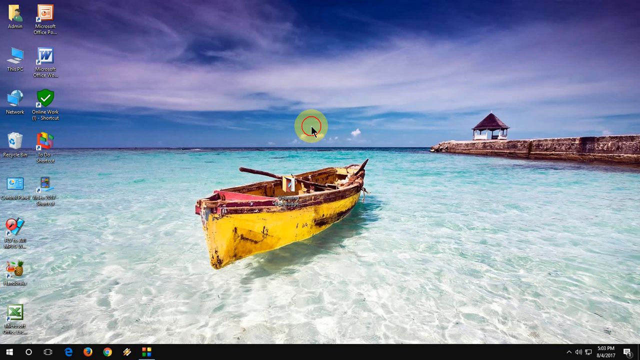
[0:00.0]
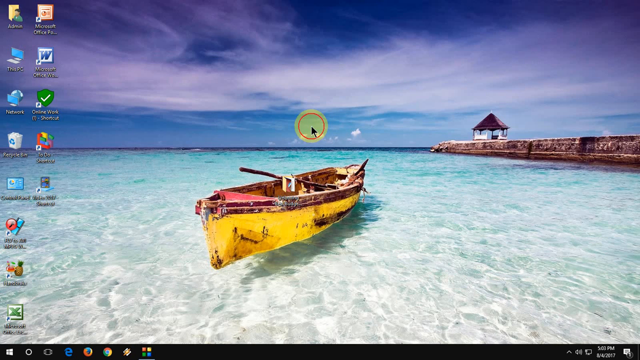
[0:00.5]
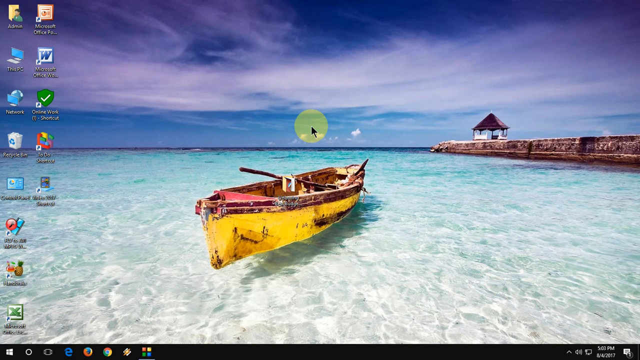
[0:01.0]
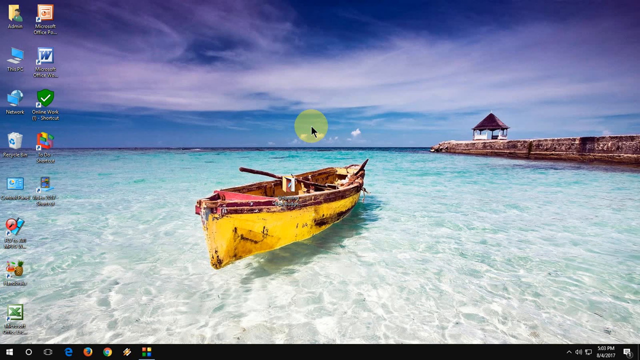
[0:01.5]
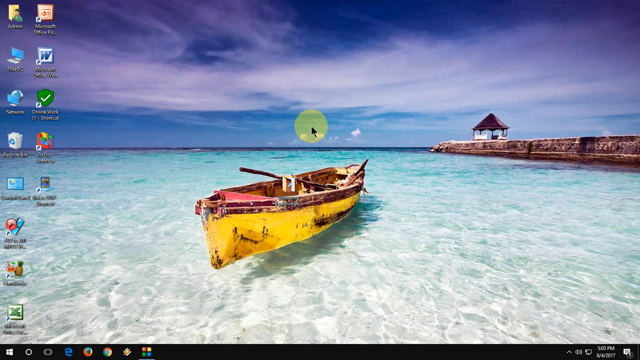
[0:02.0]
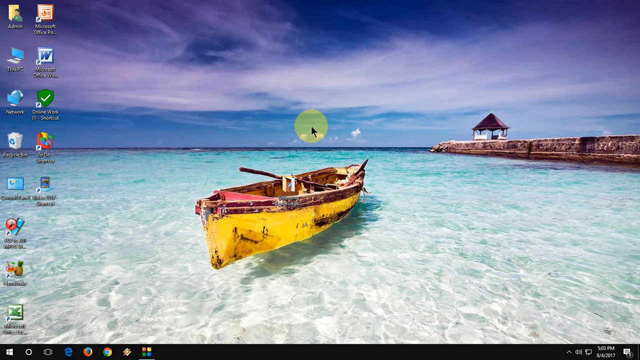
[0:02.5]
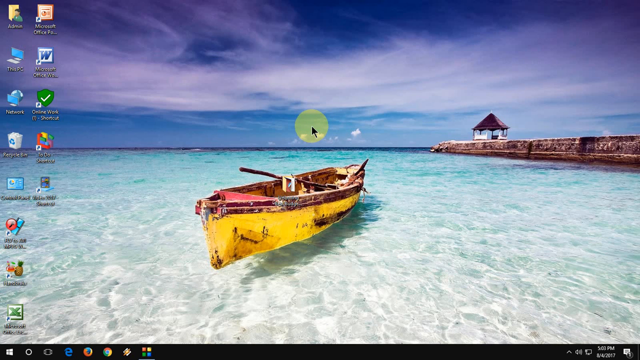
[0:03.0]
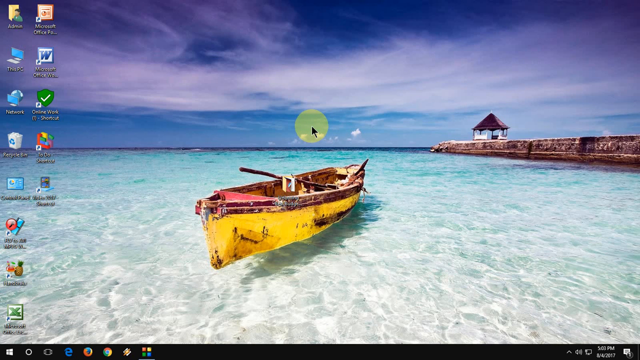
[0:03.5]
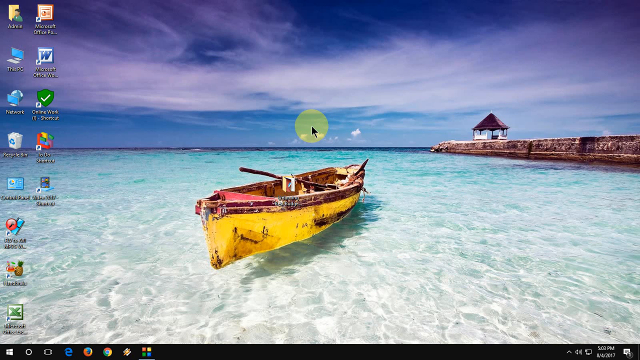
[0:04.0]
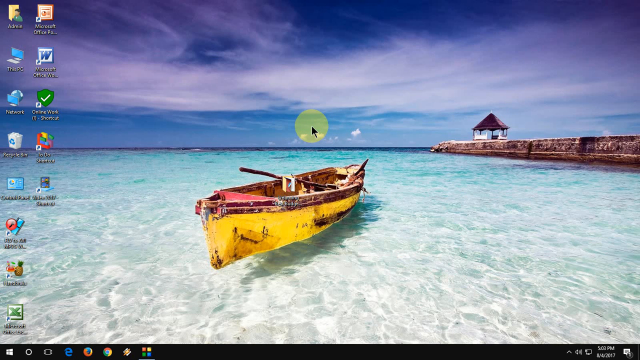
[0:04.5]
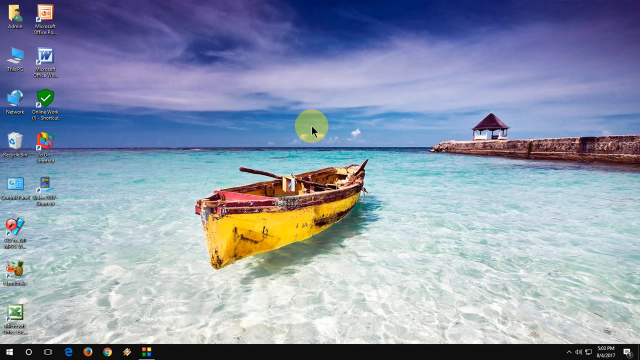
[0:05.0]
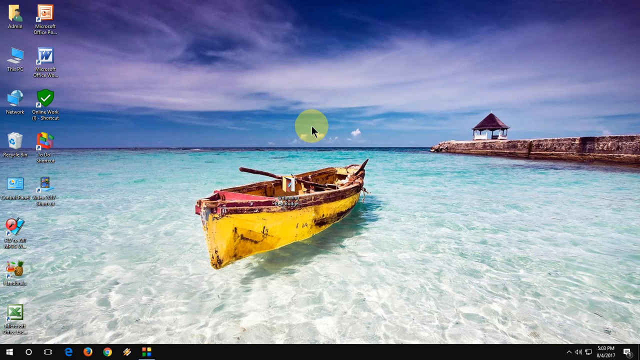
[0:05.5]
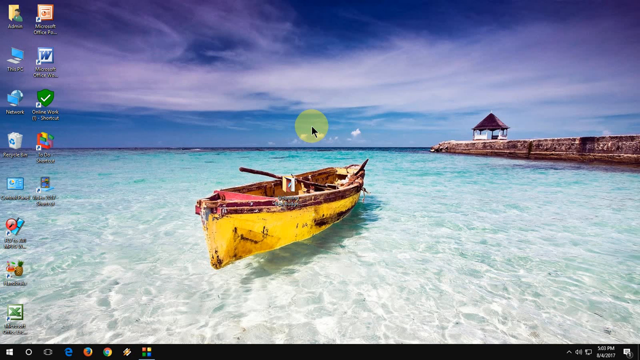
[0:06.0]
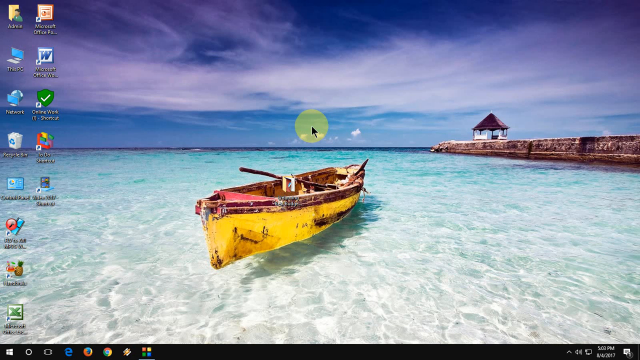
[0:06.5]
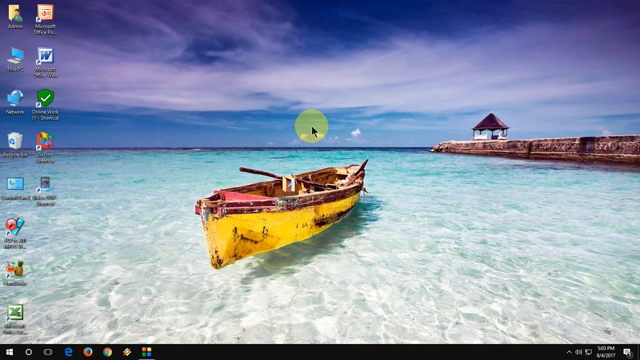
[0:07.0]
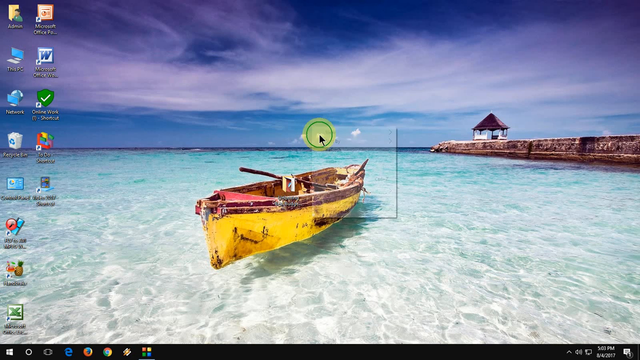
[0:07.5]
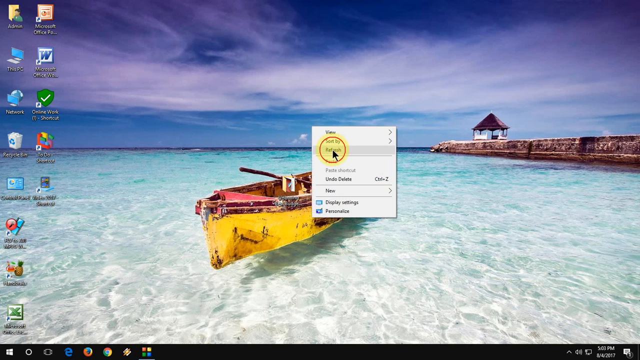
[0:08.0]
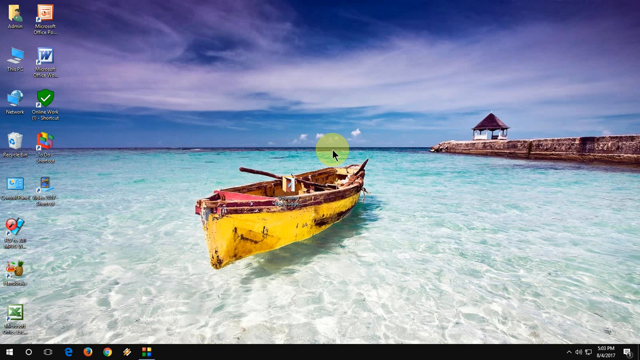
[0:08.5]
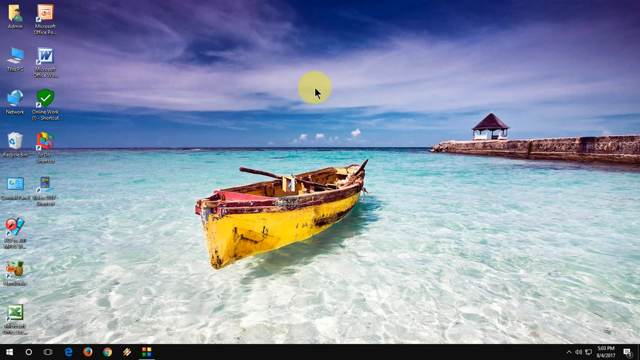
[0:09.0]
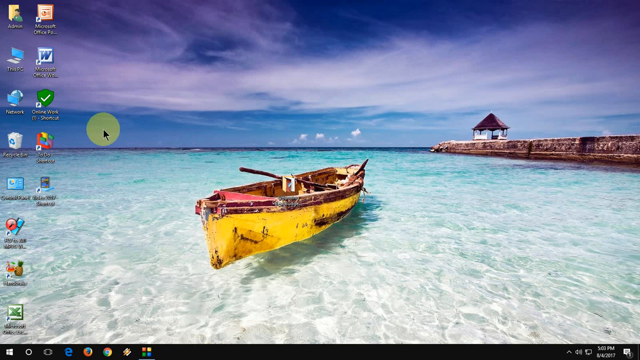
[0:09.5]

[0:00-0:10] A computer desktop is displayed with a wallpaper showing what appears to be a yellow pot and some water. There are 13 icons on the desktop. The wallpaper shows a very blue sky with feathery clouds, and a walk path with a gazebo at the end.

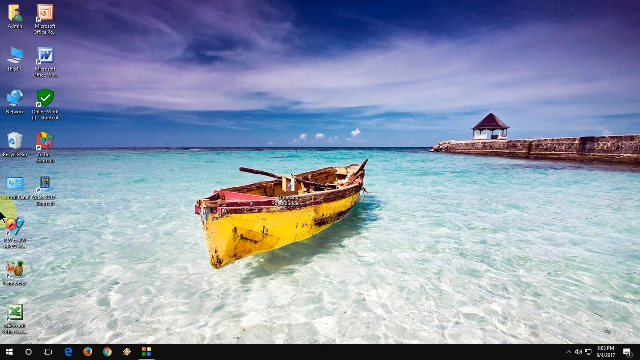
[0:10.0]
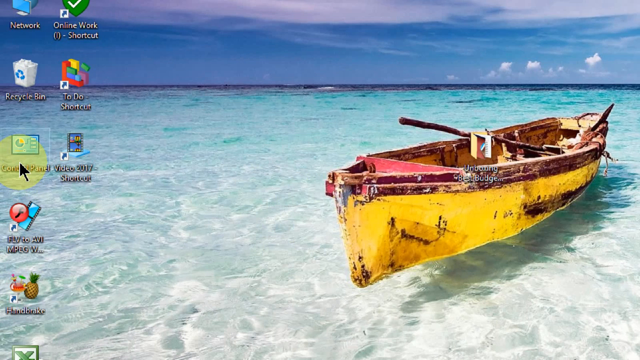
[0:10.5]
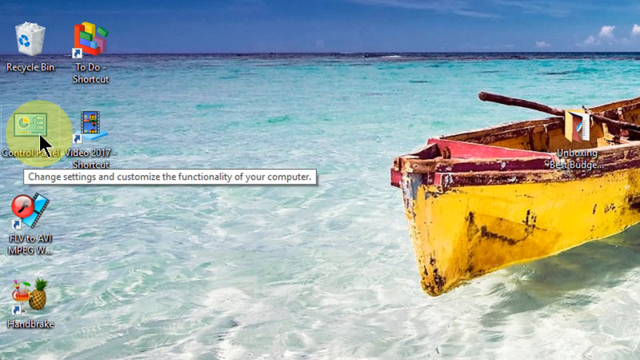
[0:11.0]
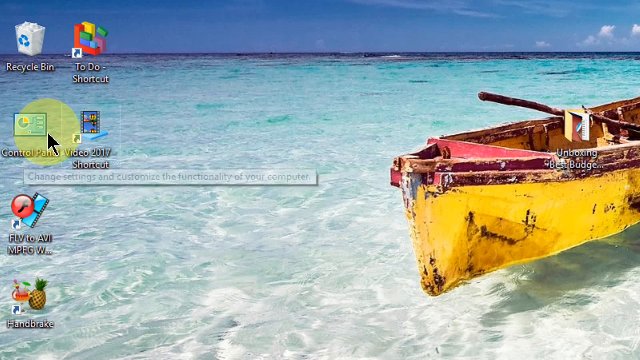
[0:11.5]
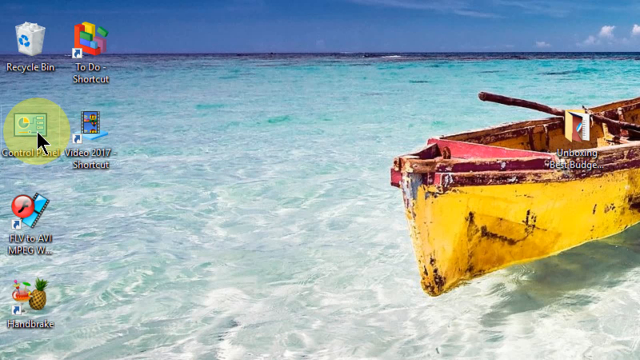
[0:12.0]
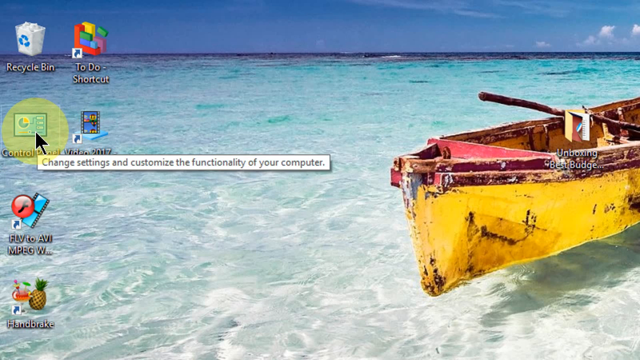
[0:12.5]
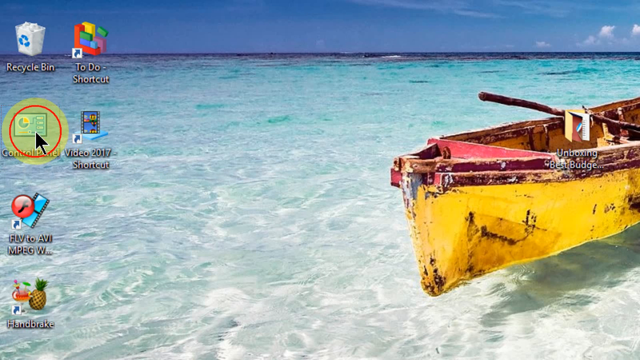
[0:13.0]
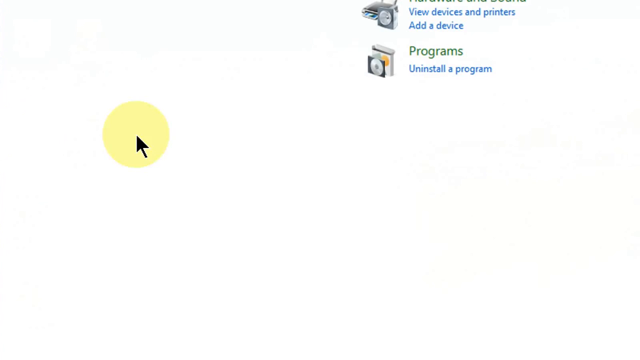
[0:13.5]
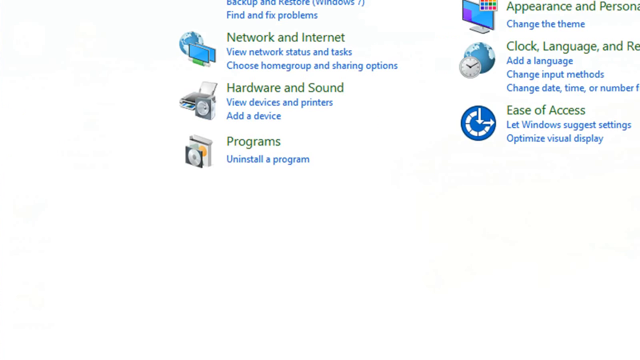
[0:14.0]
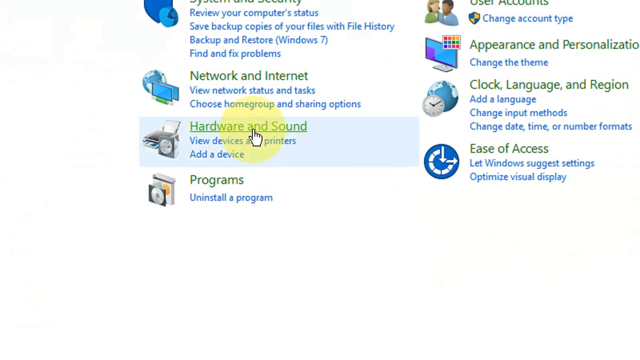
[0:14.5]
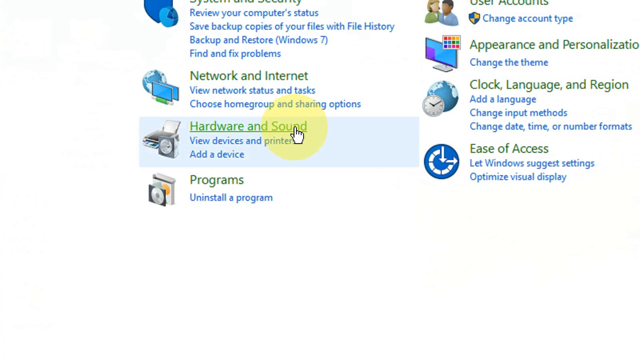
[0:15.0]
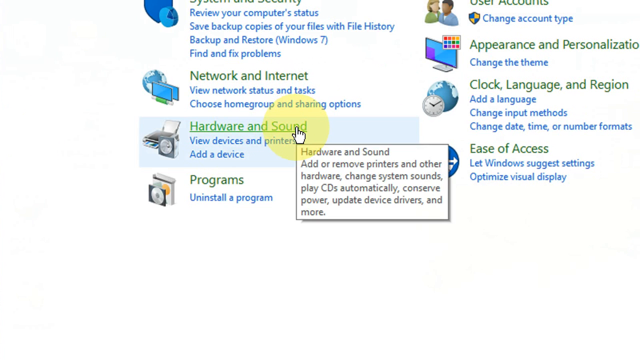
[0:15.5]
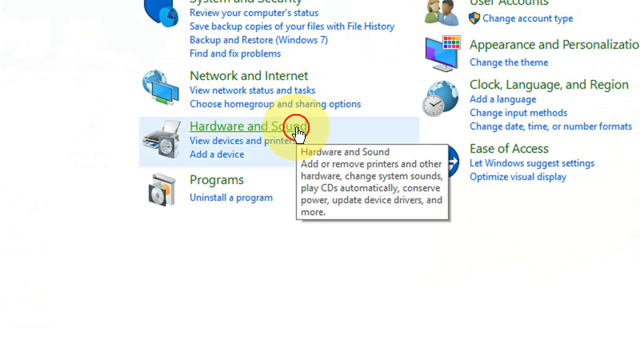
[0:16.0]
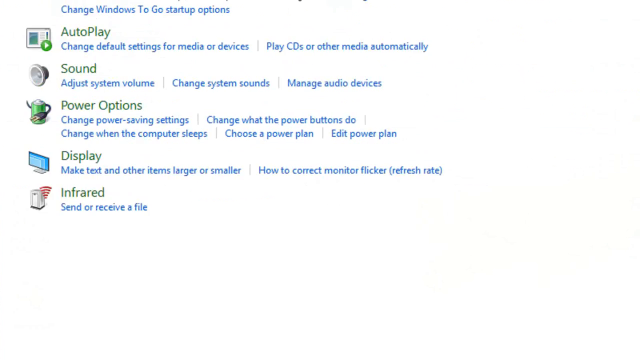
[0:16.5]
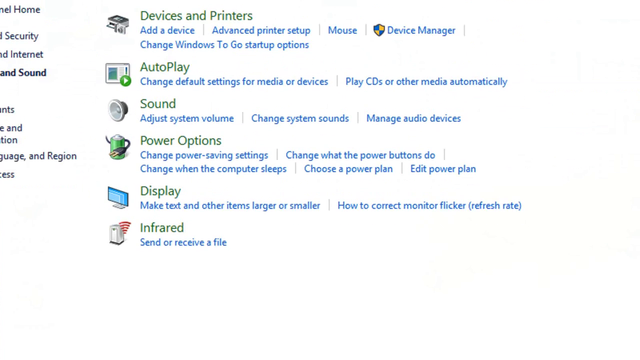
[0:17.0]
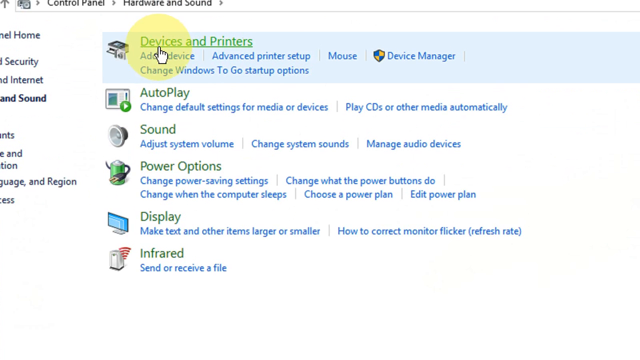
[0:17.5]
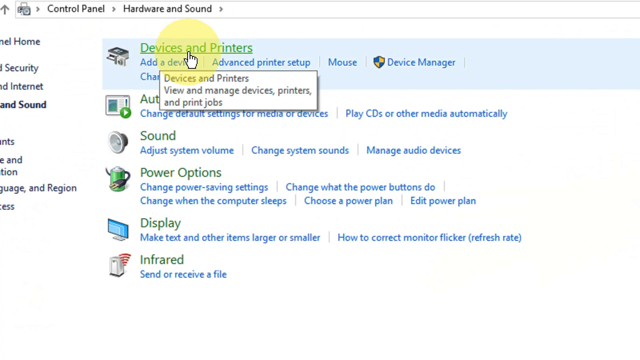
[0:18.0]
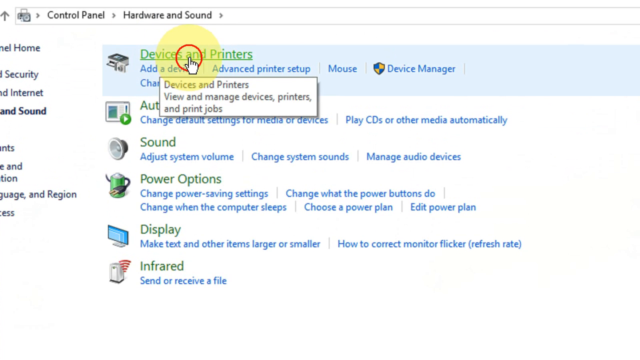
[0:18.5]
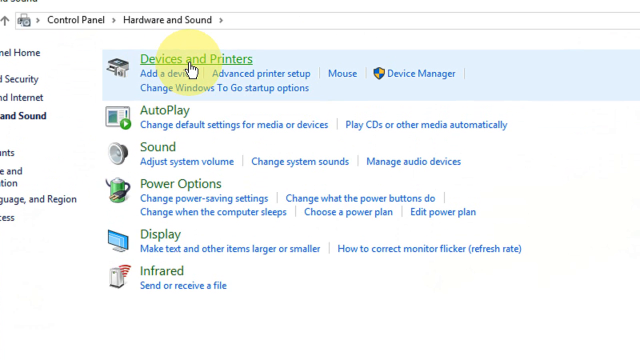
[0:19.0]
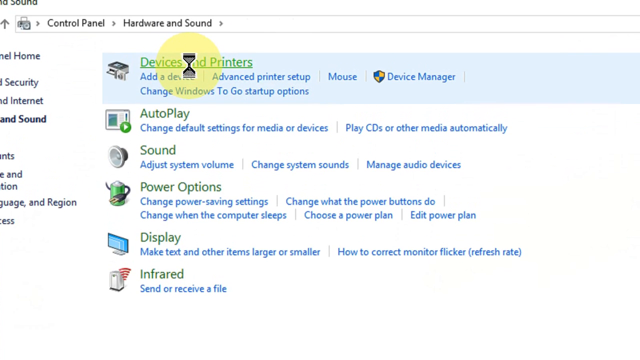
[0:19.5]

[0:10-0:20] The person moves the cursor and clicks on the control panel icon on the far left of the desktop. The pointer is a big yellow circle. The control panel opens, and he opens hardware and sound, then devices and printers, where sub icons such as add a device, advanced printer setup, mouse and device manager are visible.